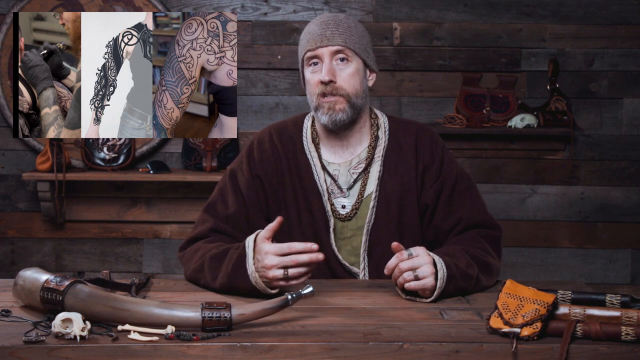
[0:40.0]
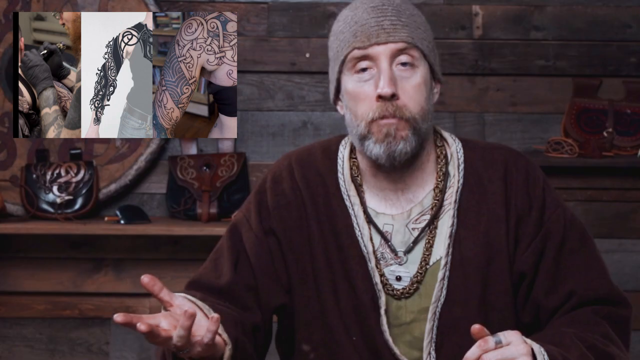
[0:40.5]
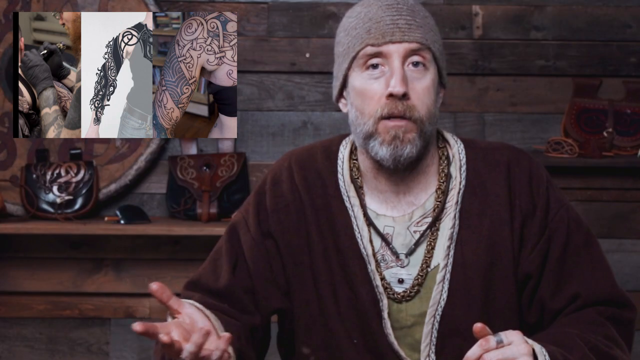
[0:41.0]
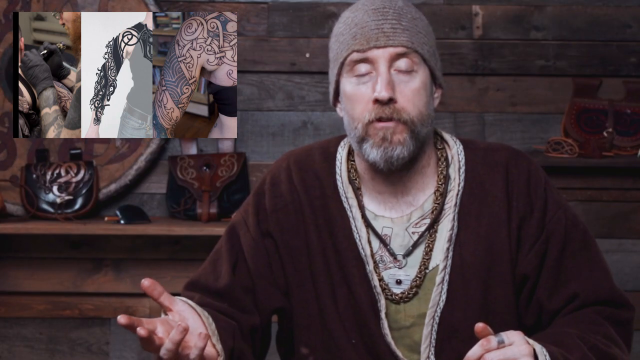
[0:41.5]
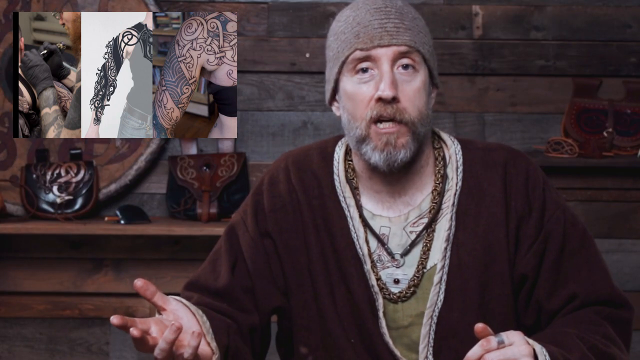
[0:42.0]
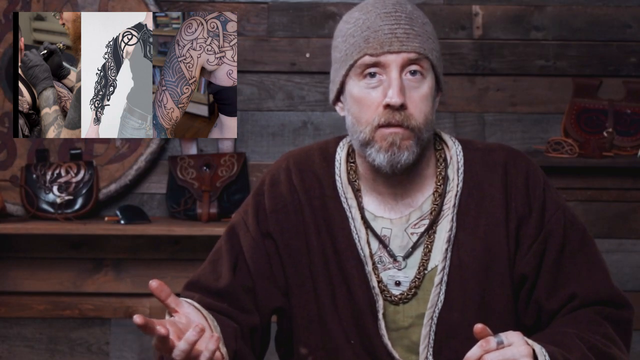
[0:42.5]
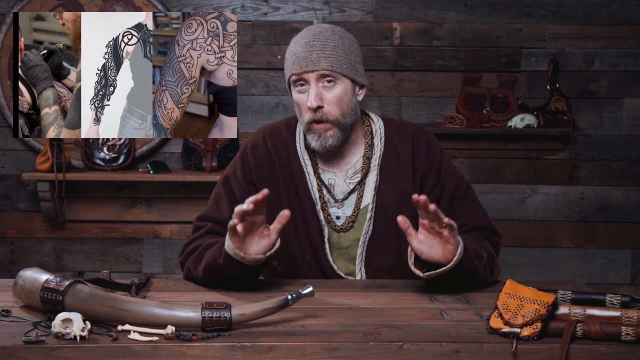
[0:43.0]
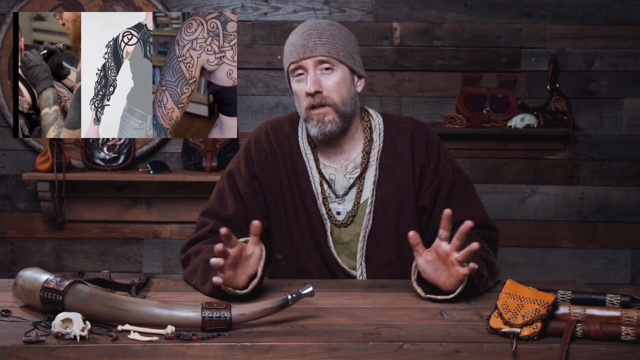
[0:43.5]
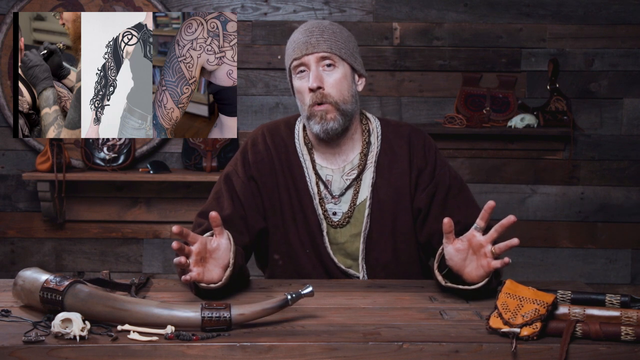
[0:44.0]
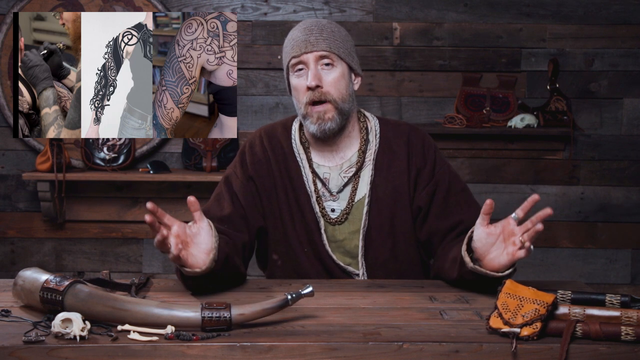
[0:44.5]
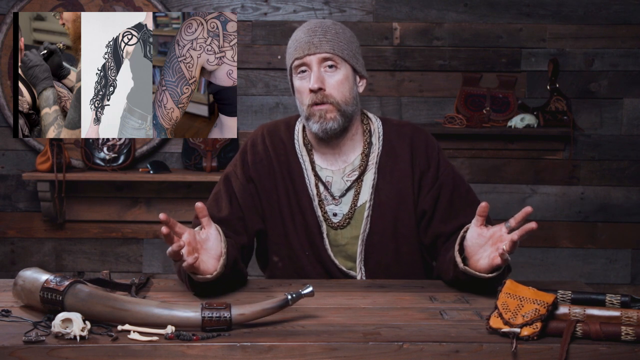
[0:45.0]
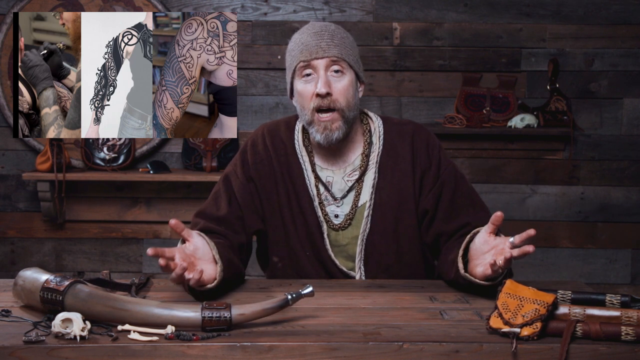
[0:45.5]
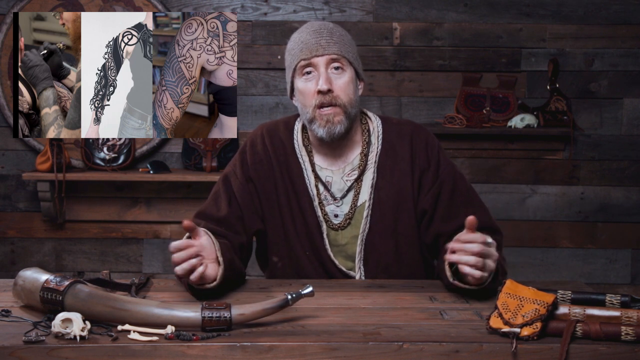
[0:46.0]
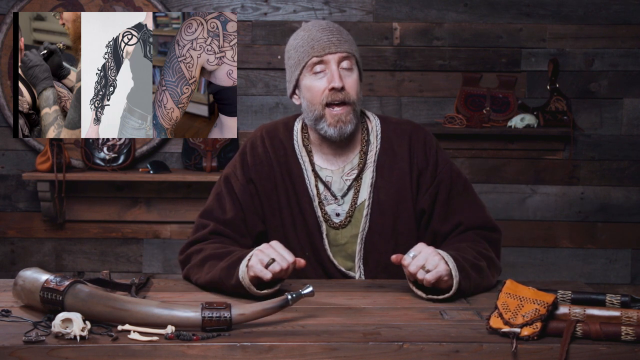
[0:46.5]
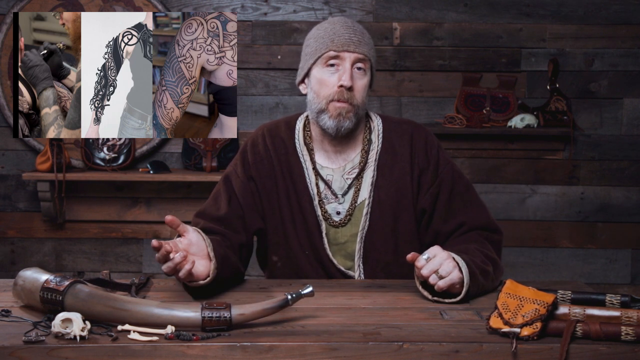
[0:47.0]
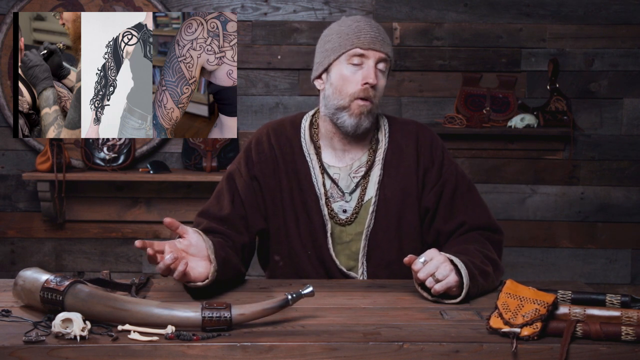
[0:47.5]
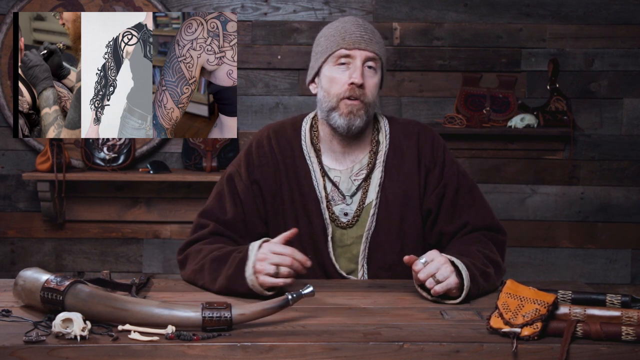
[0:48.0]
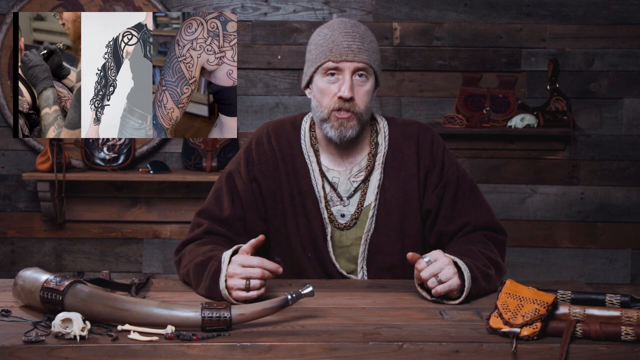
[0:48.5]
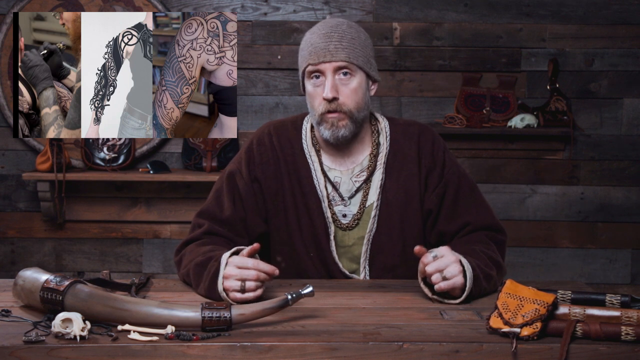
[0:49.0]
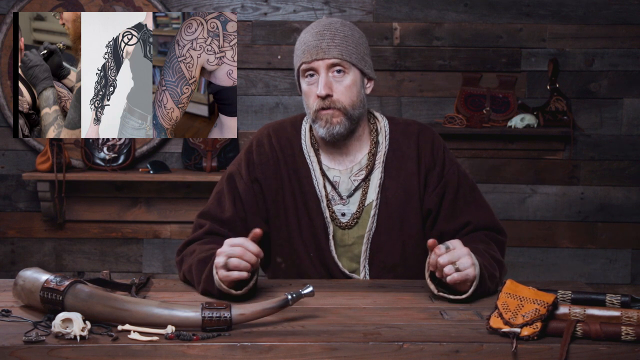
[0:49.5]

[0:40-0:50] A man, apparently a podcaster, talks at the camera, sitting in front of a desk. Behind him is a wall made of wooden planks with two shelves, one on either side of him; the one on the right is slightly higher and seems to be covered in what look like bags with sort of a Nordic or Gaelic pattern on them. In the top left of the screen, sort of a video breakout box shows different images: a tattoo being applied to someone's shoulder, a drawing of what the tattoo looks like, and then an actual photo of a man from behind with the pattern on his left shoulder and left arm. The wooden desk in front of the man is the same pattern and colour as the wall behind him. On it are some historical artefacts: what seems to be a horn on the left, and on the right a bag and another black item that is difficult to distinguish. The man talks at the camera, moving his hands; every so often his elbows are on the table, and he uses his right hand to motion to the right, then back to the centre.